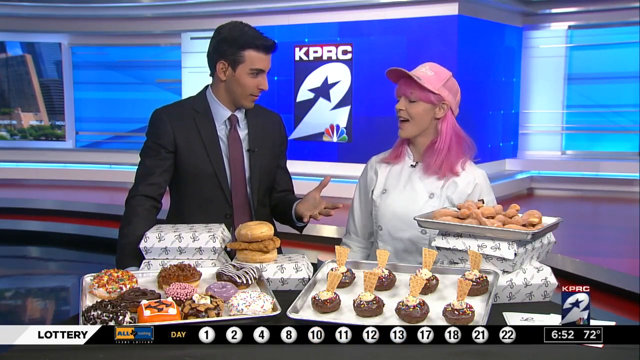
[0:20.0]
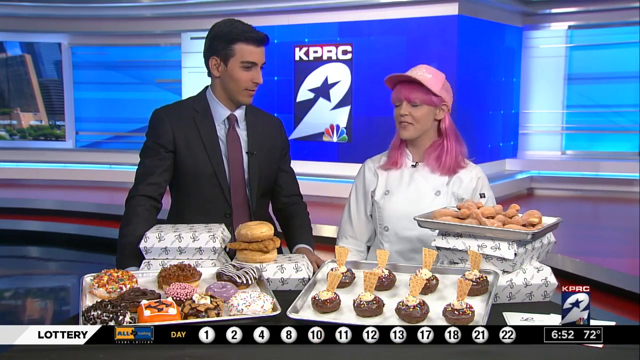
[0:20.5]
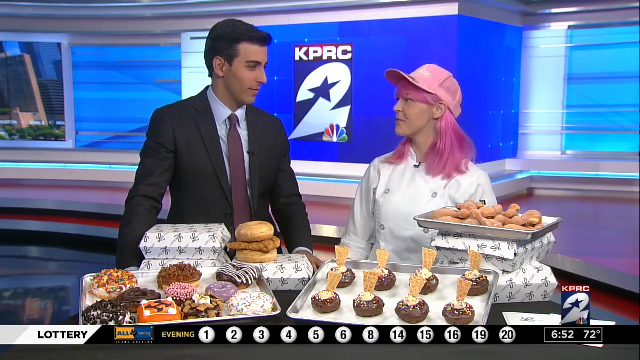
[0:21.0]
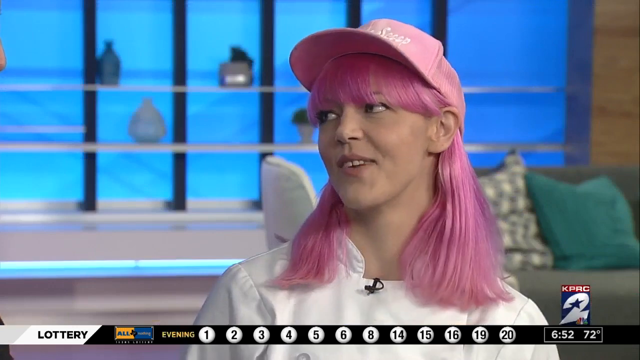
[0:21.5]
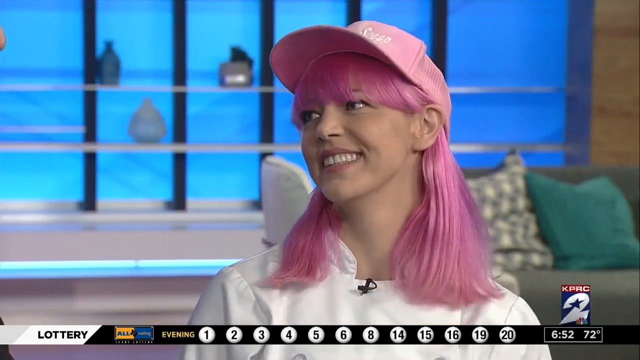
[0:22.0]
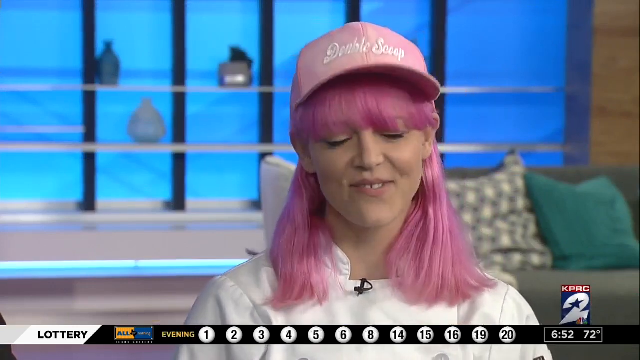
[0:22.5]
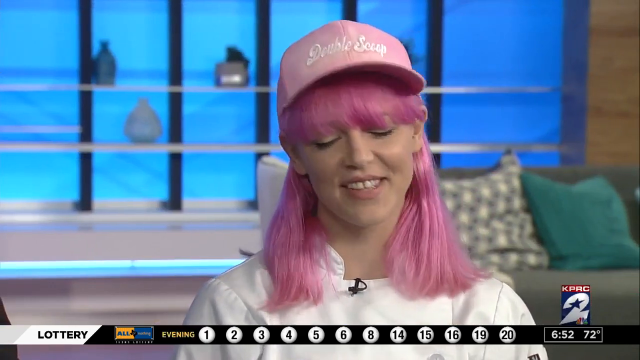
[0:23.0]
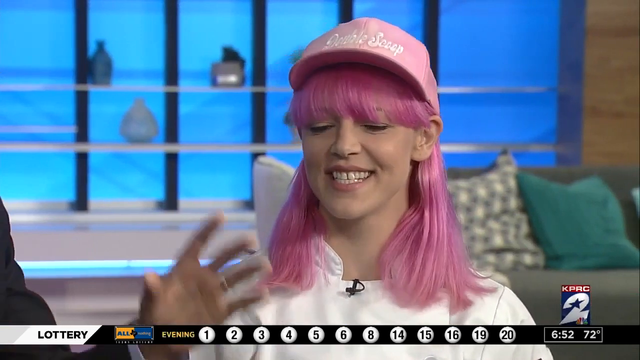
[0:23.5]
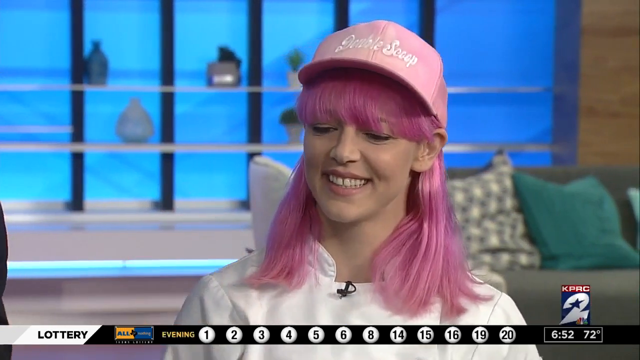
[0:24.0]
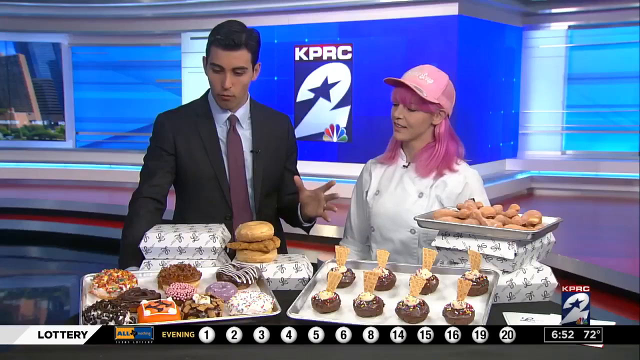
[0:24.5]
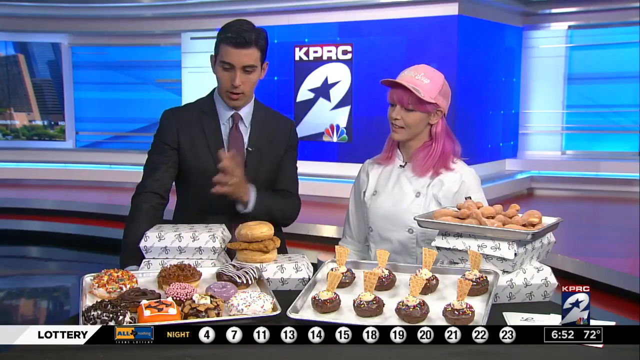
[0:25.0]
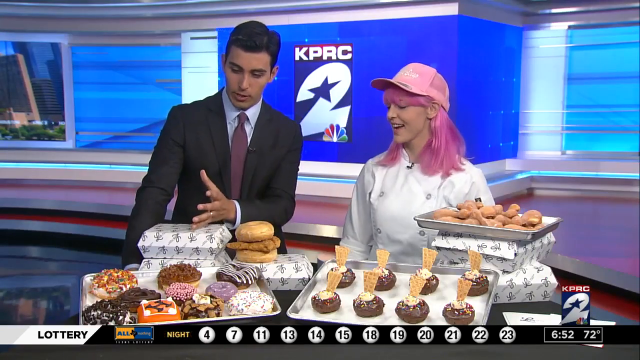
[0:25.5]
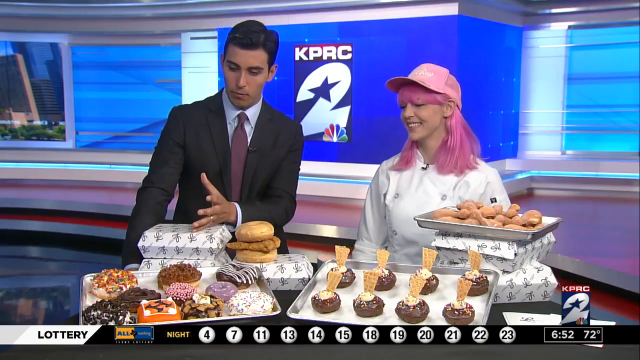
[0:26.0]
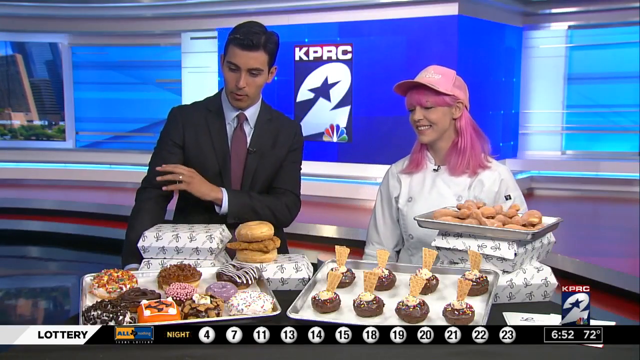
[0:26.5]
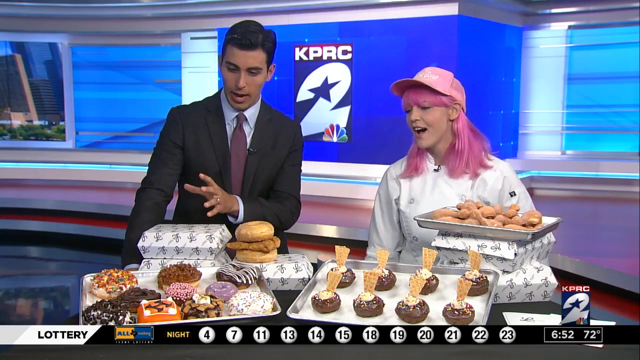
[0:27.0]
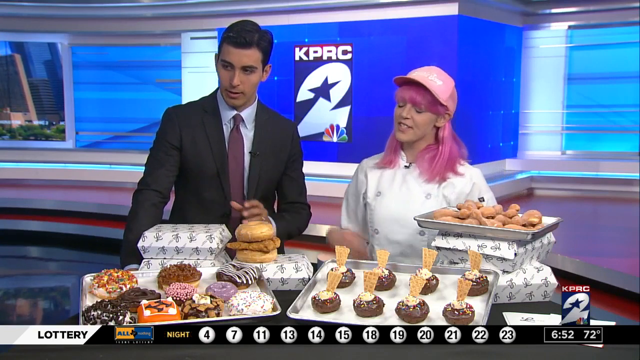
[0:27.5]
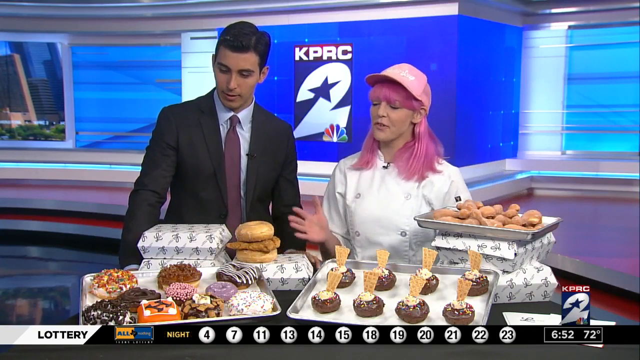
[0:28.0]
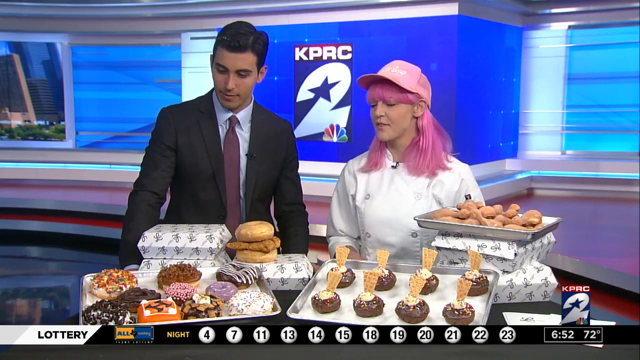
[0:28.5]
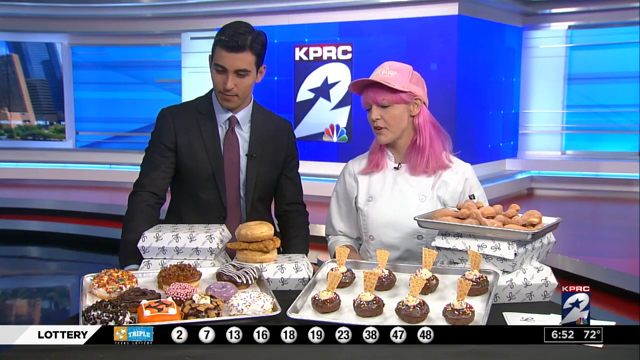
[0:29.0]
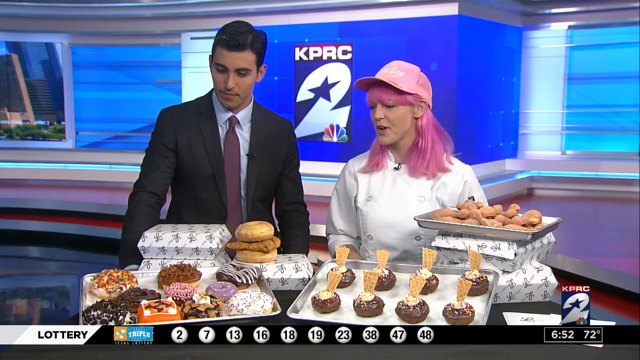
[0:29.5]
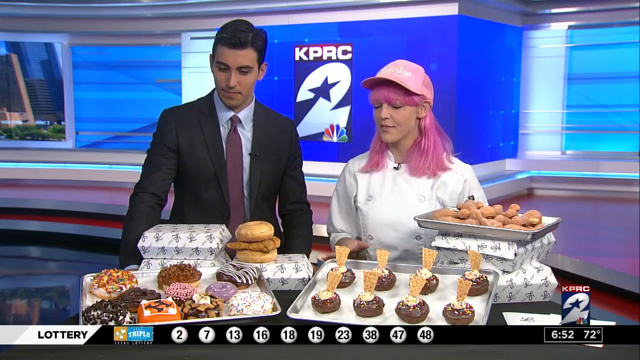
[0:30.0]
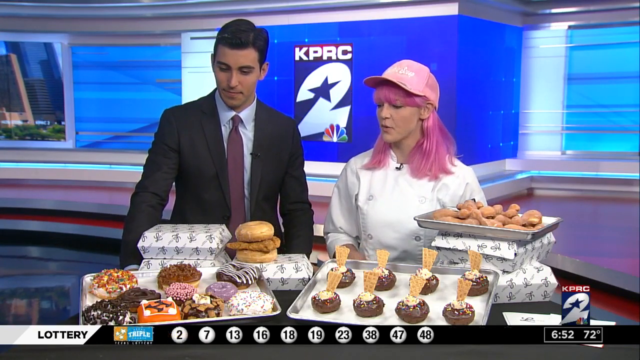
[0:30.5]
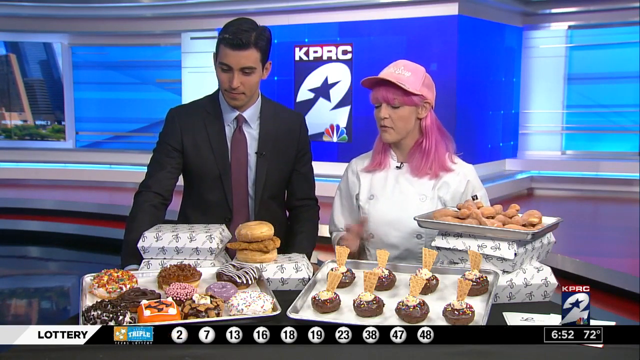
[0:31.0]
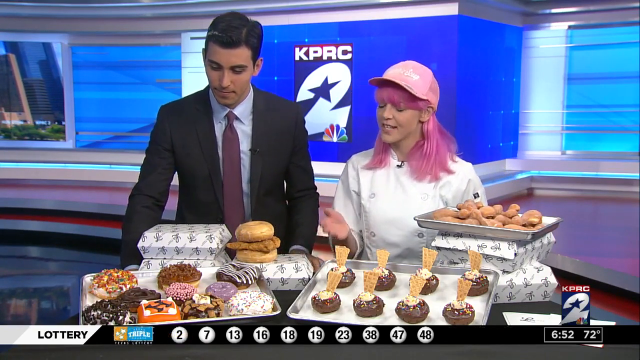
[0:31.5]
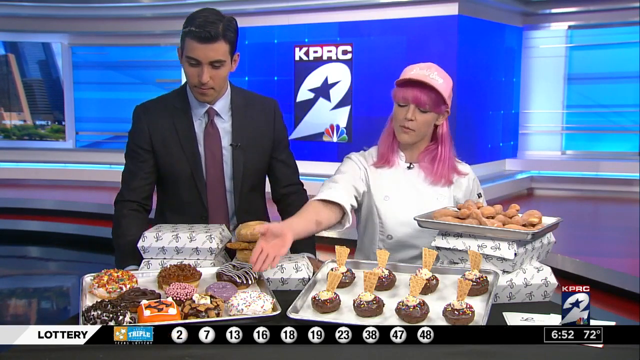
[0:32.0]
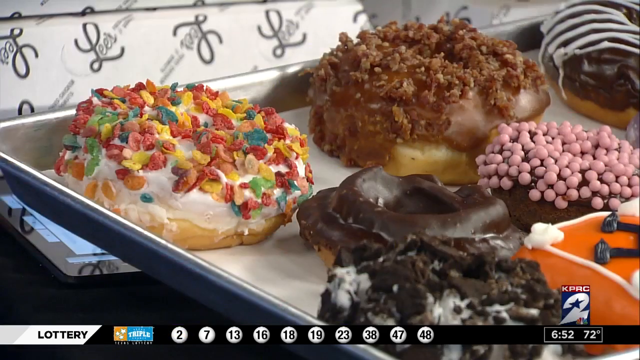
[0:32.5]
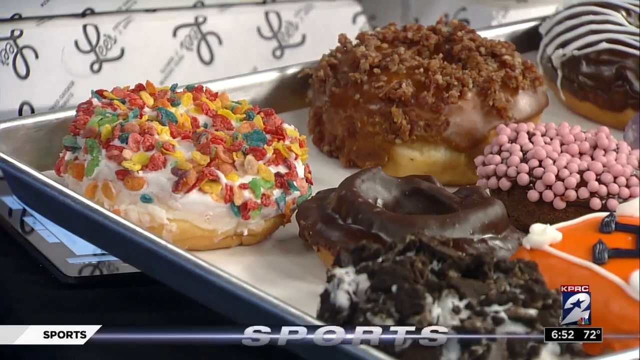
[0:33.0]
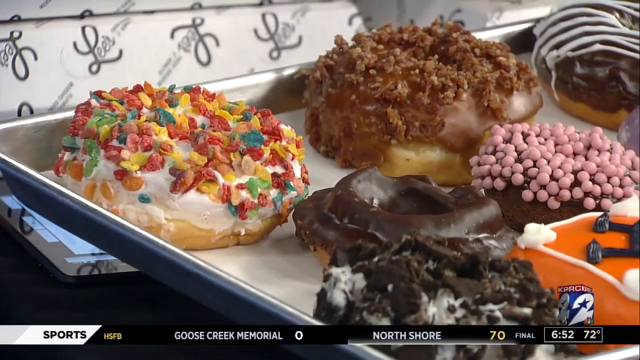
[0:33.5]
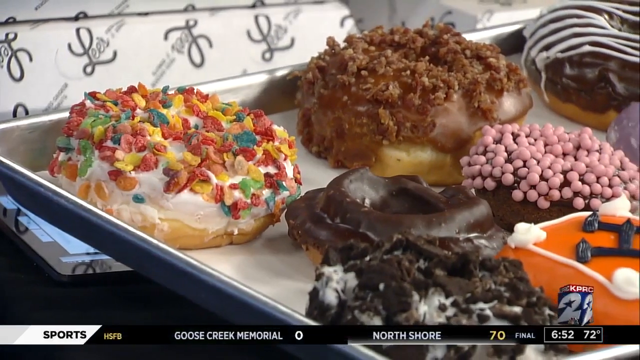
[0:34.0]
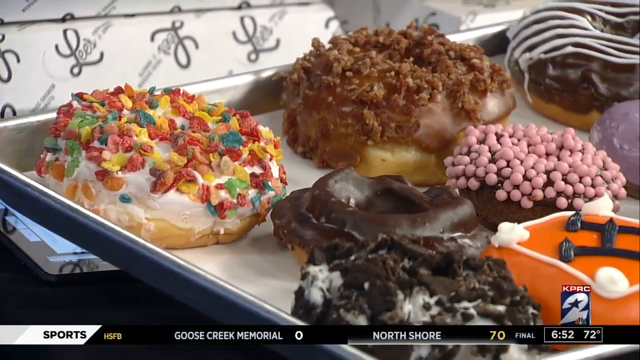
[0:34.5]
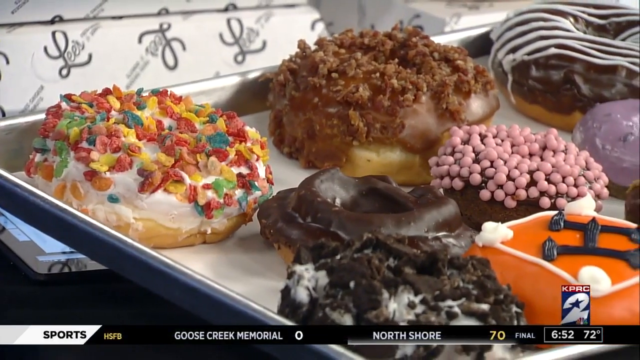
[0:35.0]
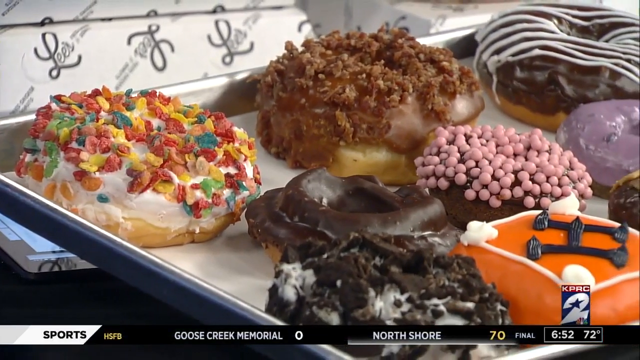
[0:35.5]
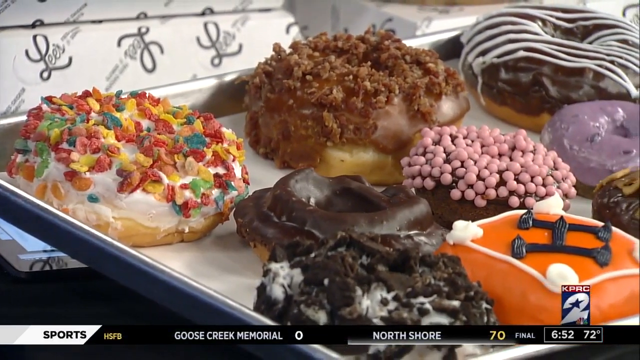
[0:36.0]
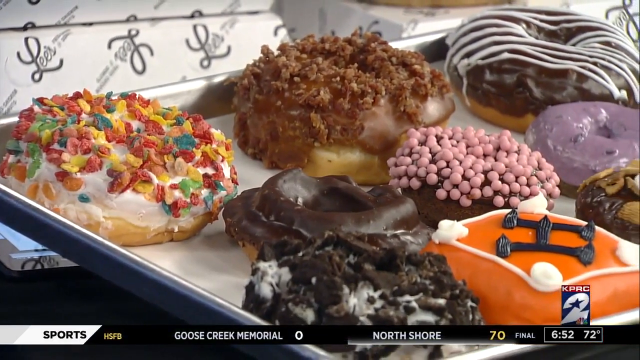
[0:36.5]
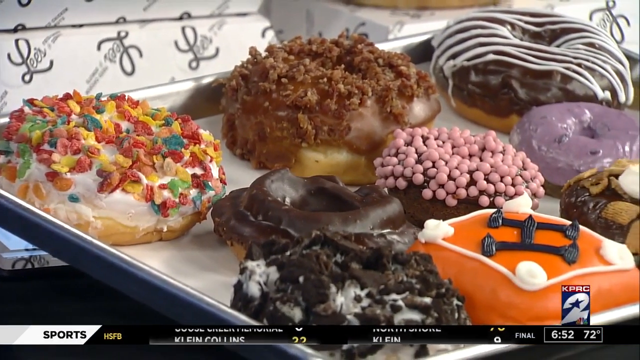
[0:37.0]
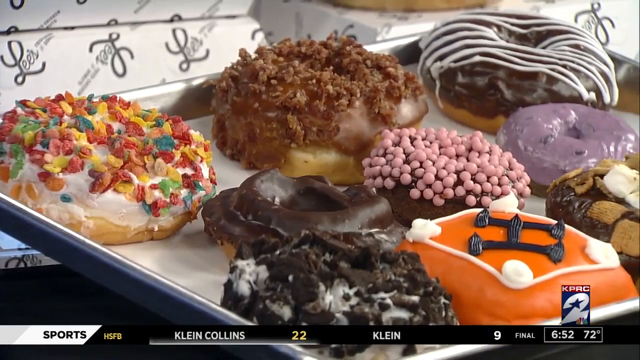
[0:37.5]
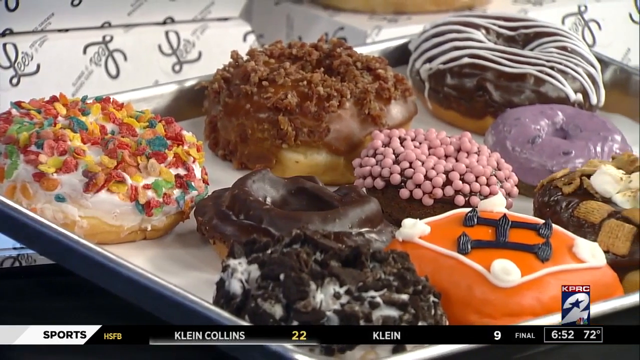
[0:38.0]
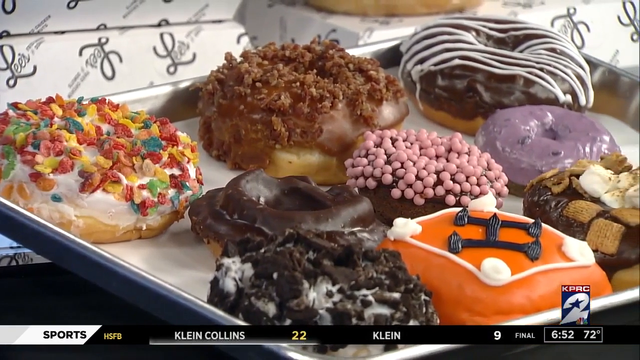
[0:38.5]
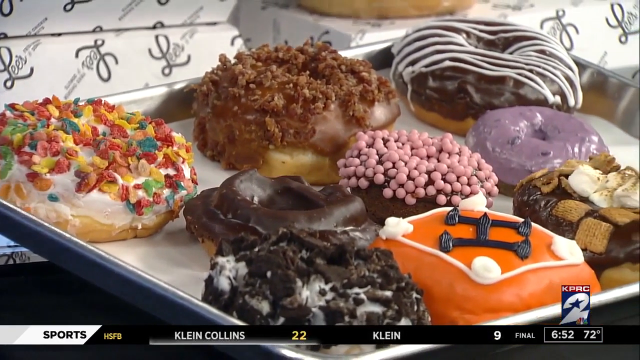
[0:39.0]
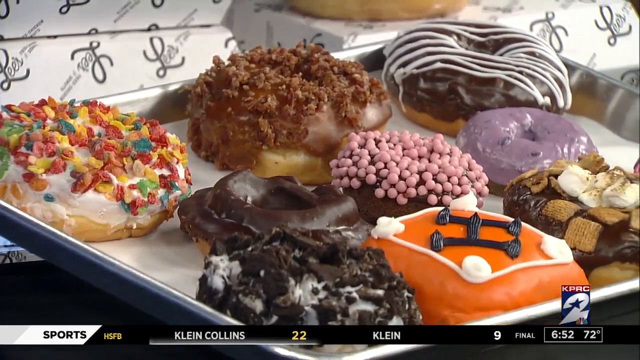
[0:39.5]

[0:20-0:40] The KPRC2 talk show is presented by a man in a black suit. The chef, who has pink hair and a pink cap, describes the food displayed in front of them: sweet items including donuts and small decorated cakes. Some of the food is on trays, and she points at the donuts. Lottery results numbers are shown on screen, along with headlines of sports results, indicating a story from the news.